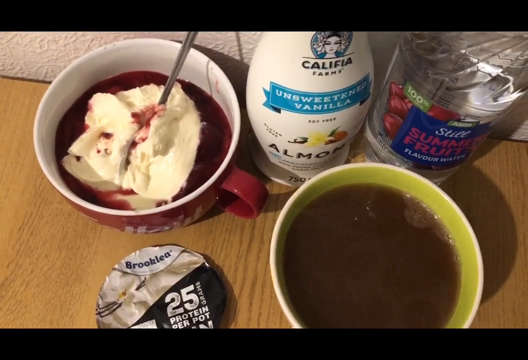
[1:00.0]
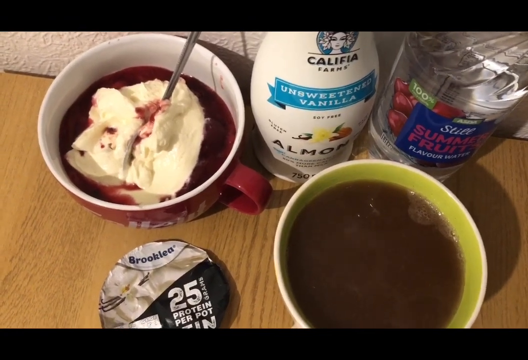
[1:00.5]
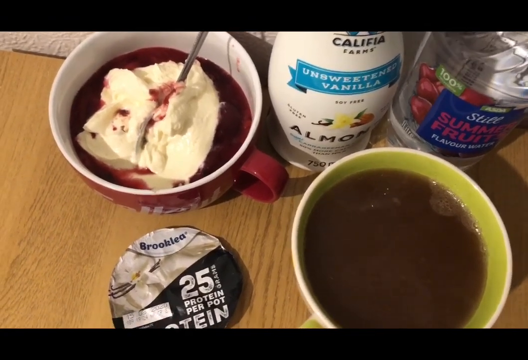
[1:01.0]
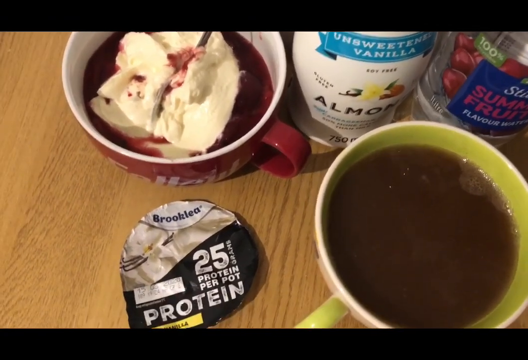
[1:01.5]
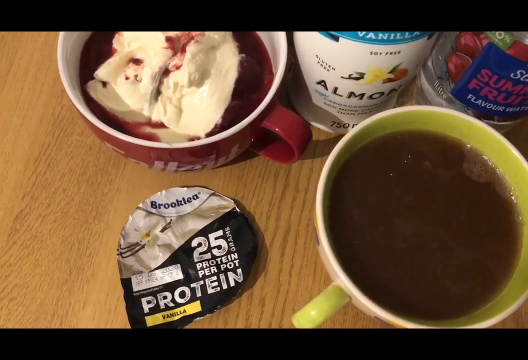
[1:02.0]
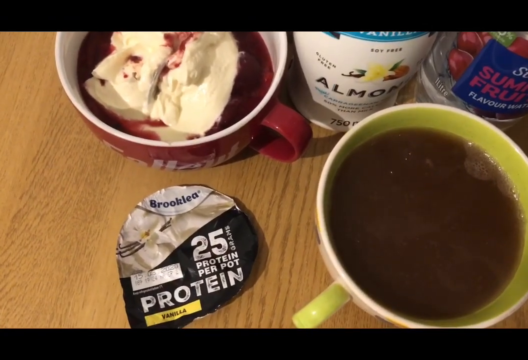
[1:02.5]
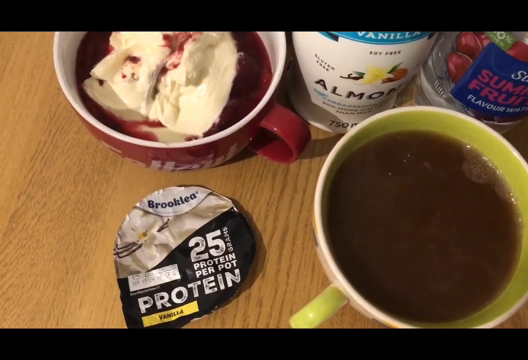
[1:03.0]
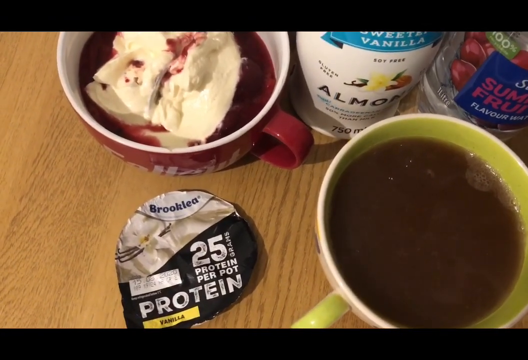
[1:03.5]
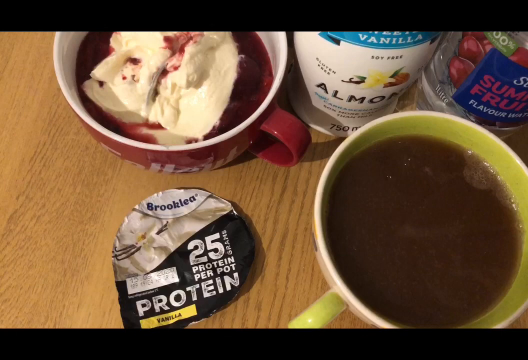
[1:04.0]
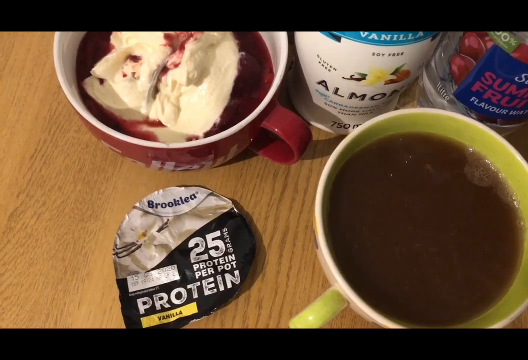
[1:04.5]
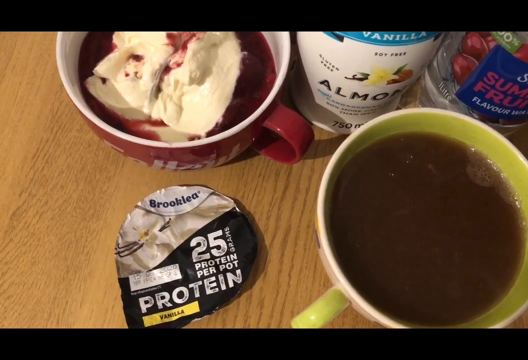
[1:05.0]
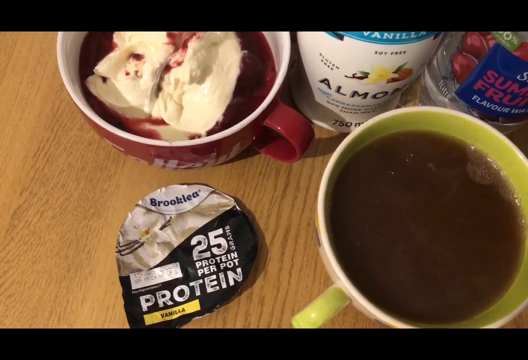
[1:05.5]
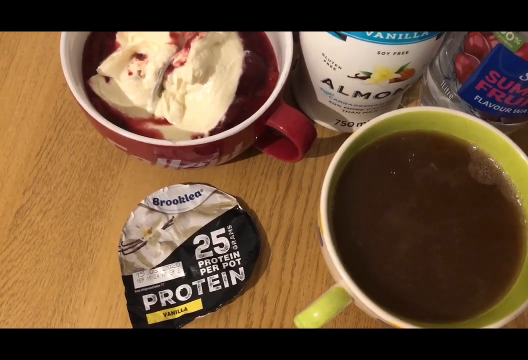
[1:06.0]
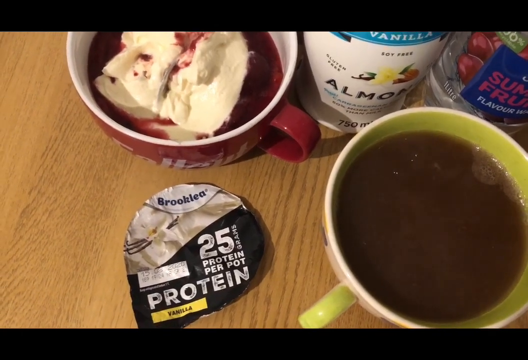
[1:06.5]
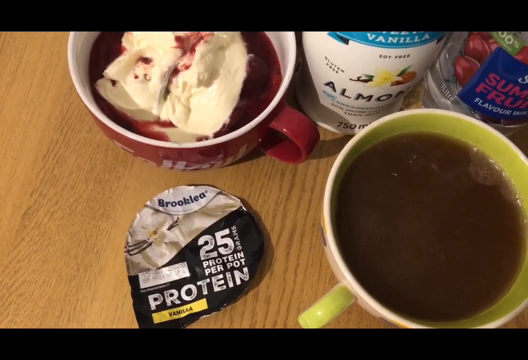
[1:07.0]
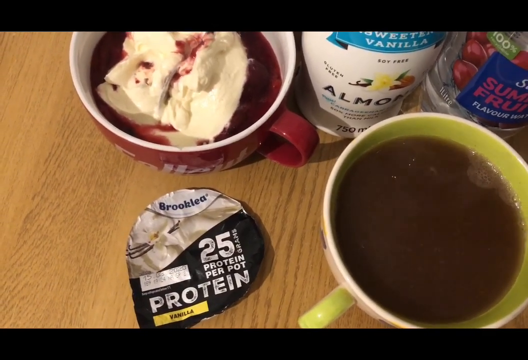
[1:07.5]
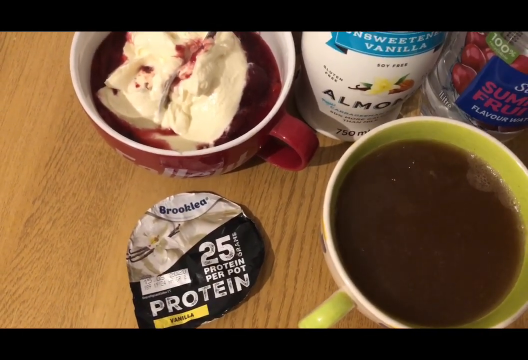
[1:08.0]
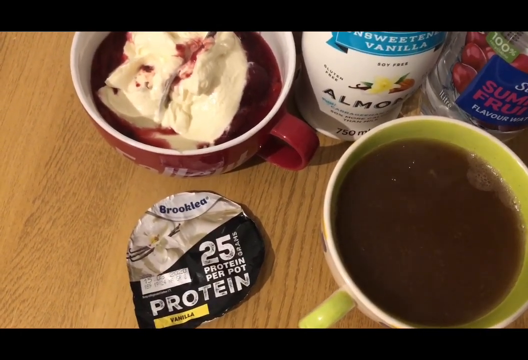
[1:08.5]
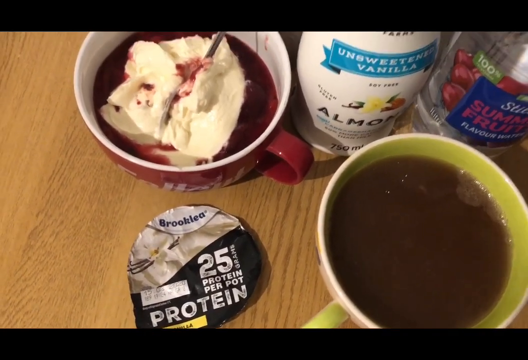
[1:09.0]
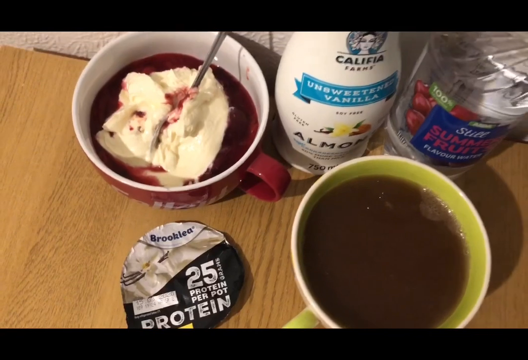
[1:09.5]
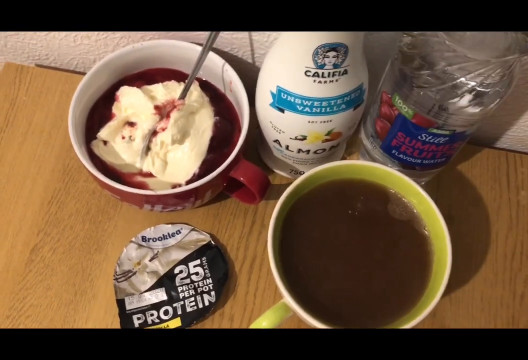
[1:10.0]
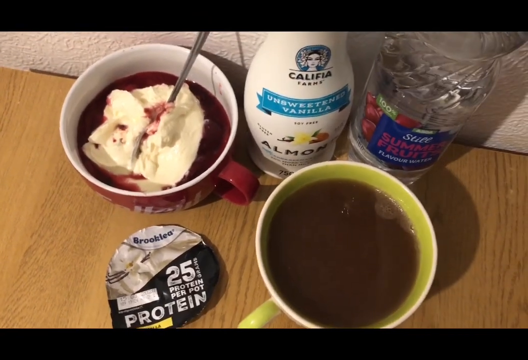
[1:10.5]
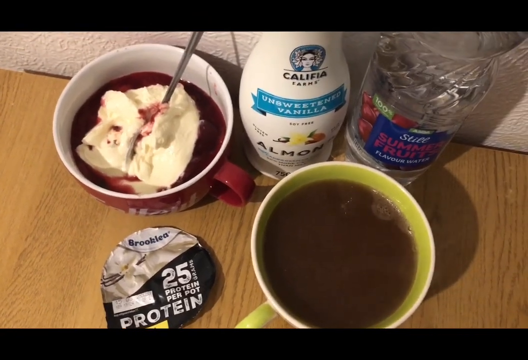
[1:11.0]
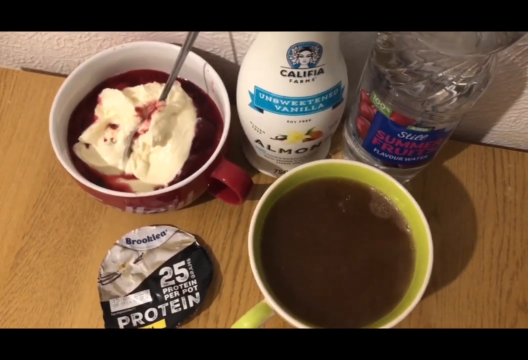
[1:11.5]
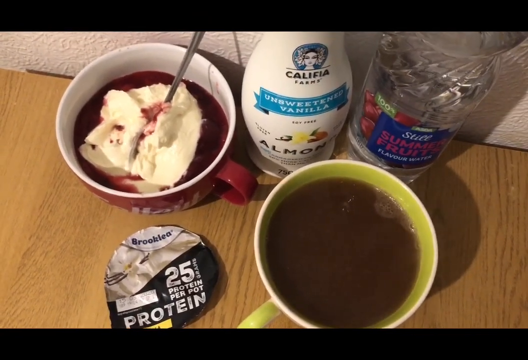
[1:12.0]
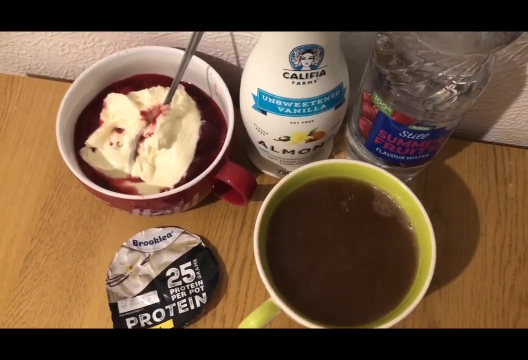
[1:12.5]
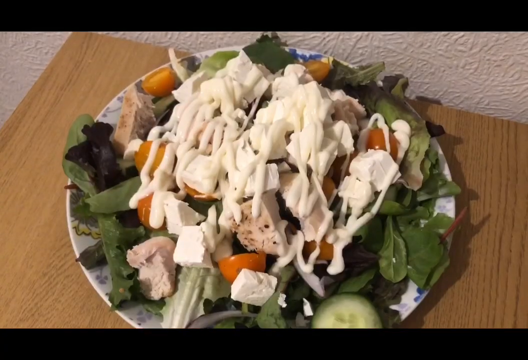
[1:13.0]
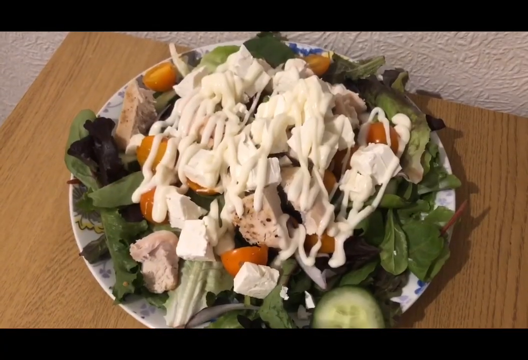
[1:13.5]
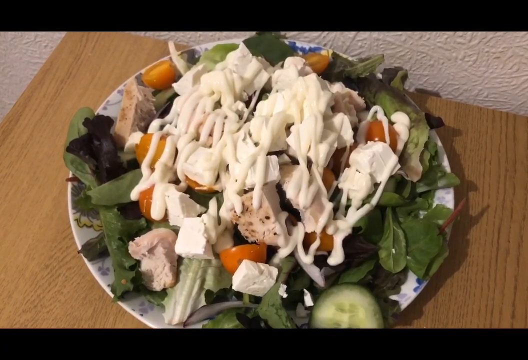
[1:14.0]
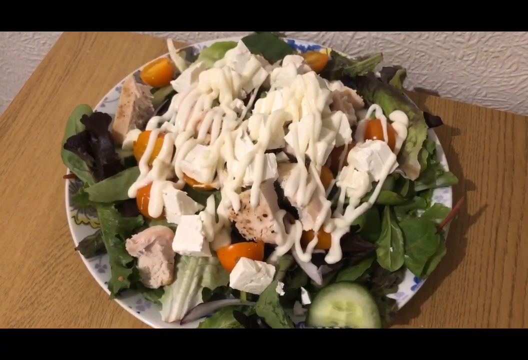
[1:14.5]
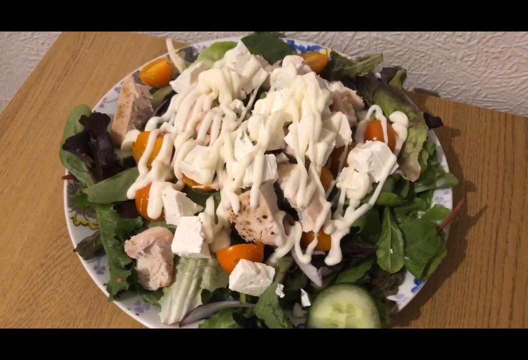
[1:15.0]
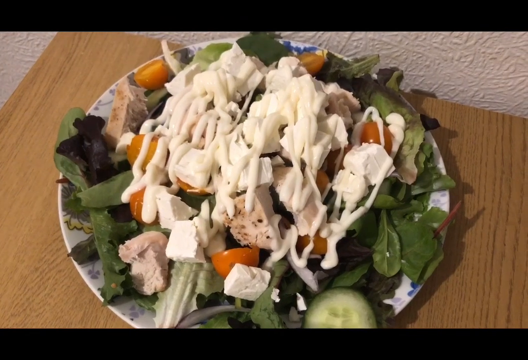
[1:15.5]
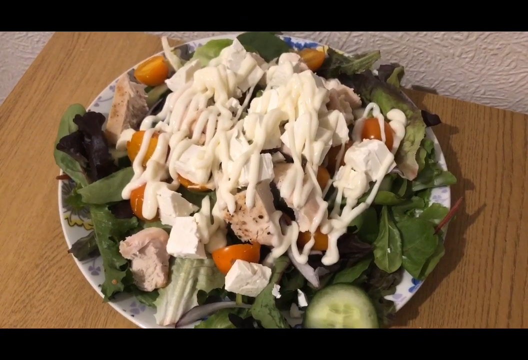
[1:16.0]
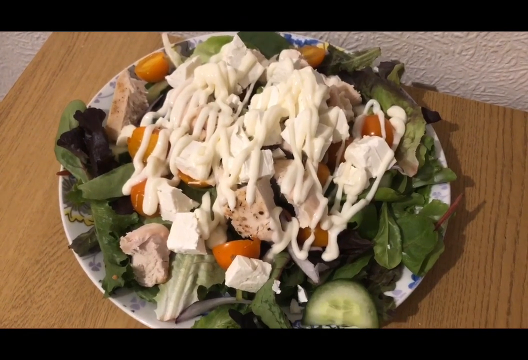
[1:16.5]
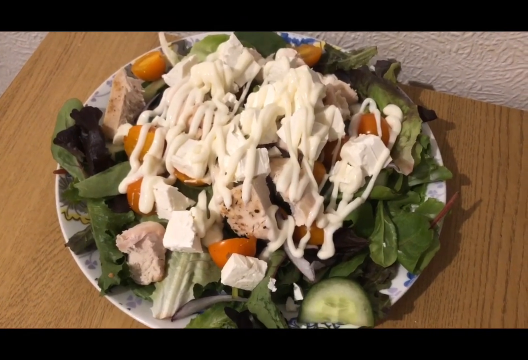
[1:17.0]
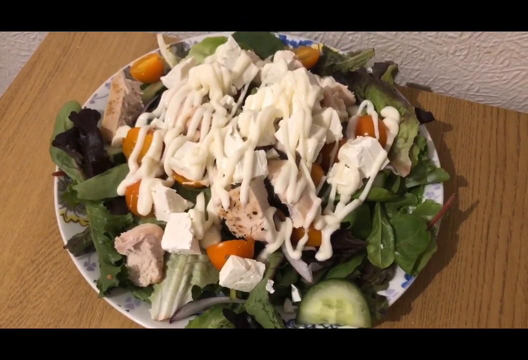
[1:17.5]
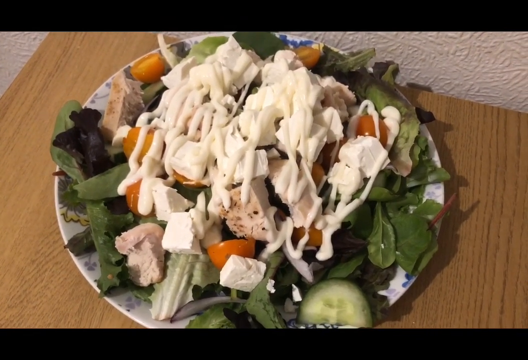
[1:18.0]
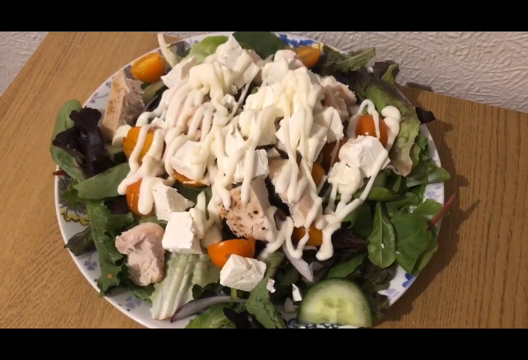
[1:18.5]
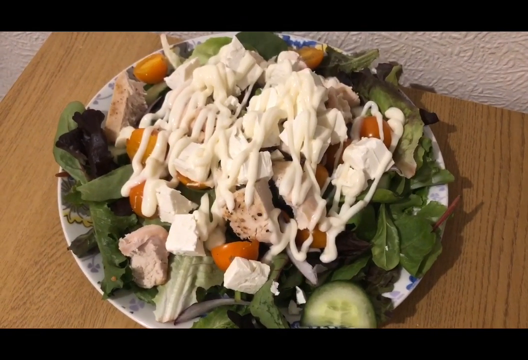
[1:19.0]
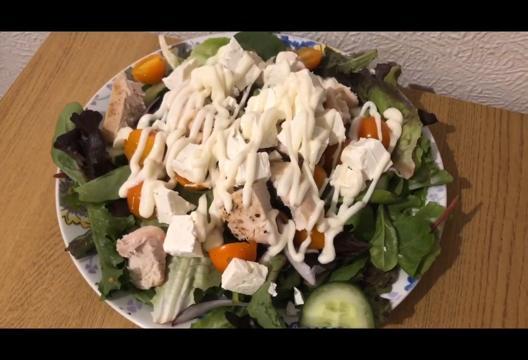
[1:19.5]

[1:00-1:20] The person films down at a light brown wooden table. At the top left is a large red cup of white yogurt with red berry sauce on the outer edges and a spoon stuck upright in the middle. To the right is a white bottle of Califia Farms almond milk with a blue ribbon on the front that says "unsweetened vanilla." To the right of that is a tall clear bottle of clear liquid with a blue label on the front that says "still summer fruit flavour water" and pictures of red berries. In front of that is a tall light green cup of dark brown coffee with a little steam coming up, and to its left a small circular foil lid that looks like it came from a cup of yogurt. The camera zooms in closer on the lid, showing a diagonal line with the top half silver and the bottom half black; it says "Brooklea" on top, "25 protein per pot" underneath, and a yellow box that says "vanilla." The camera then sort of backs out so all the food items are in the middle of the view. The screen changes to the same table with a large plate of salad: small green and dark green leafy greens, halves of orange cherry tomatoes, small cubes of feta cheese, some cubes of chicken, and a white sauce generously drizzled on top.